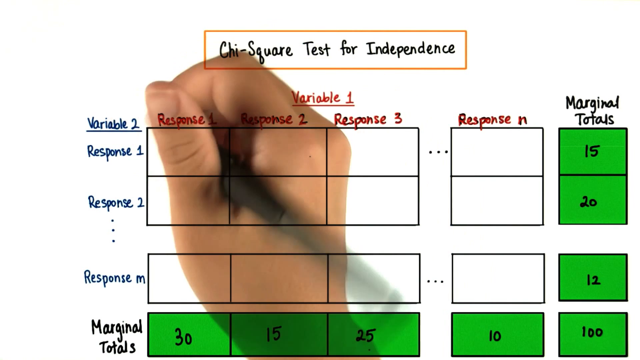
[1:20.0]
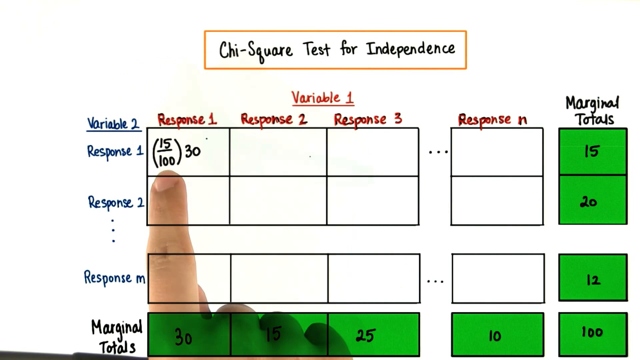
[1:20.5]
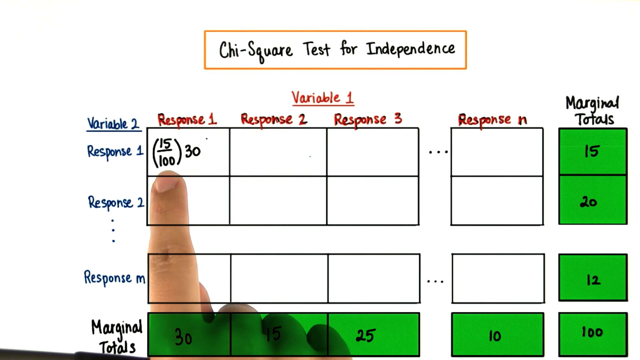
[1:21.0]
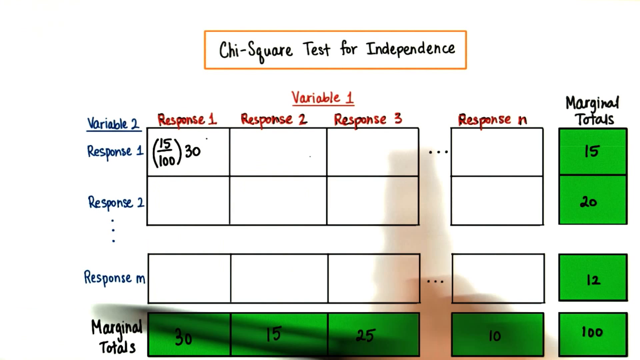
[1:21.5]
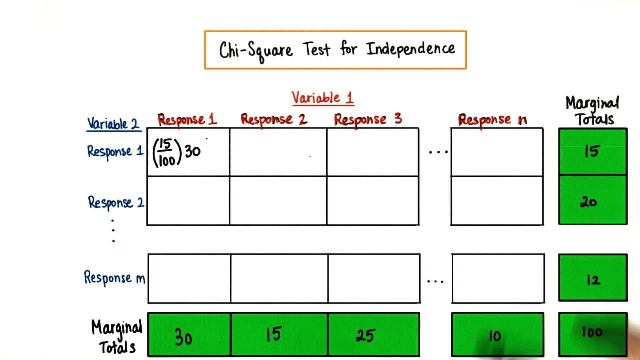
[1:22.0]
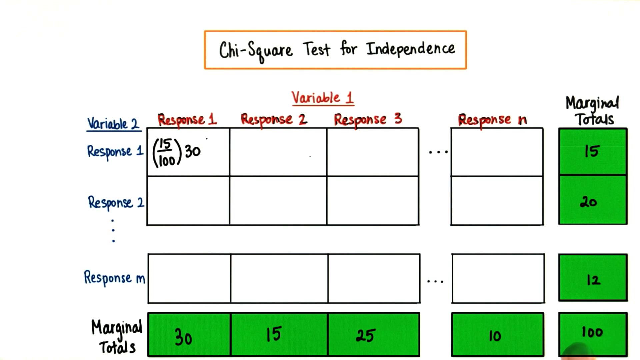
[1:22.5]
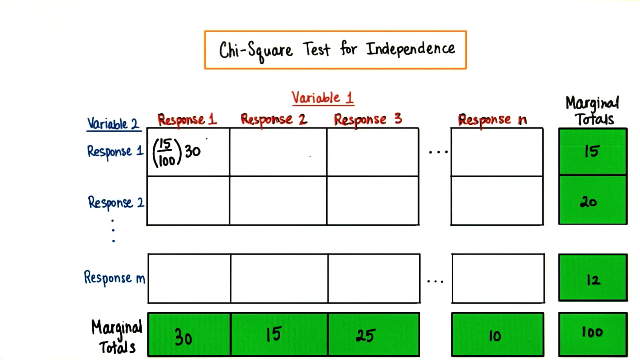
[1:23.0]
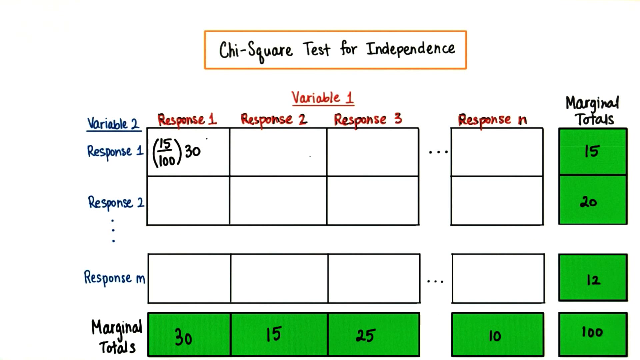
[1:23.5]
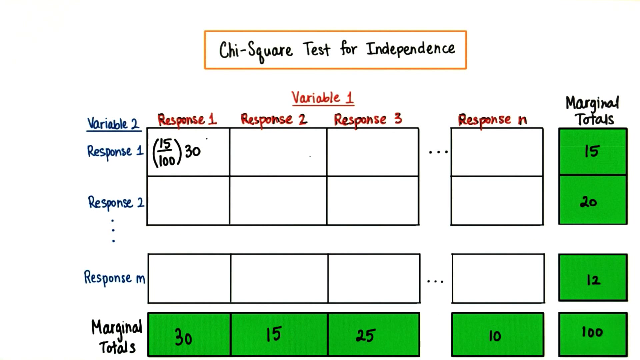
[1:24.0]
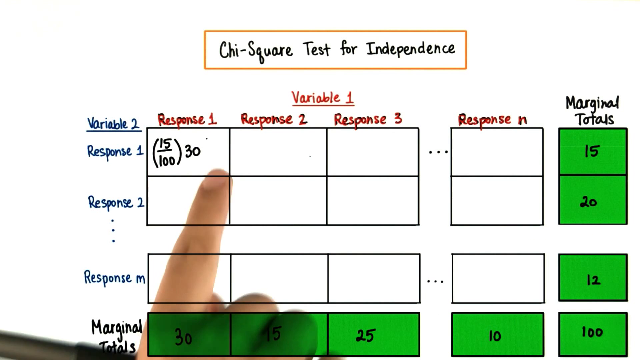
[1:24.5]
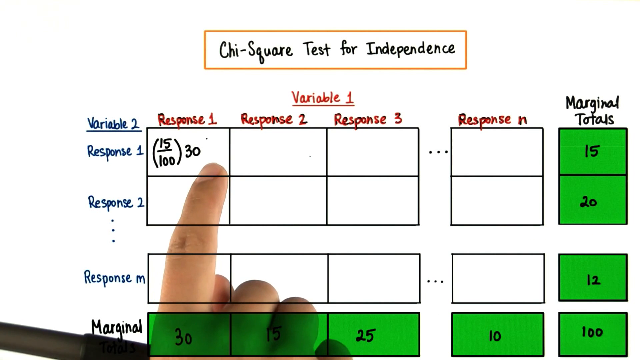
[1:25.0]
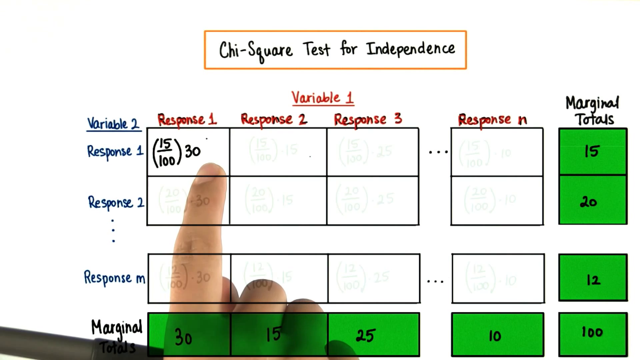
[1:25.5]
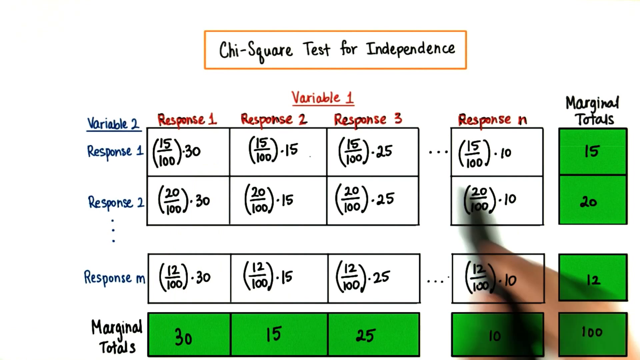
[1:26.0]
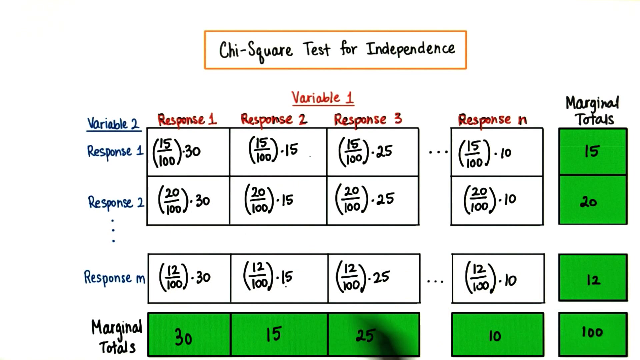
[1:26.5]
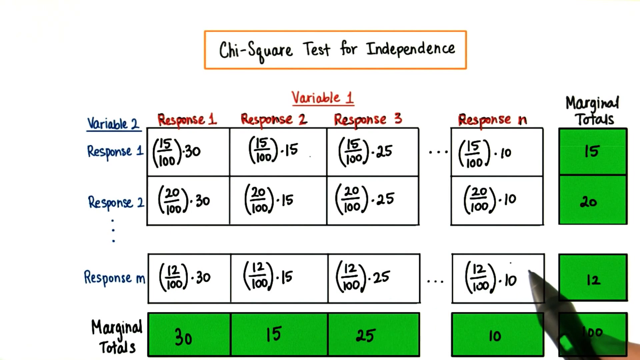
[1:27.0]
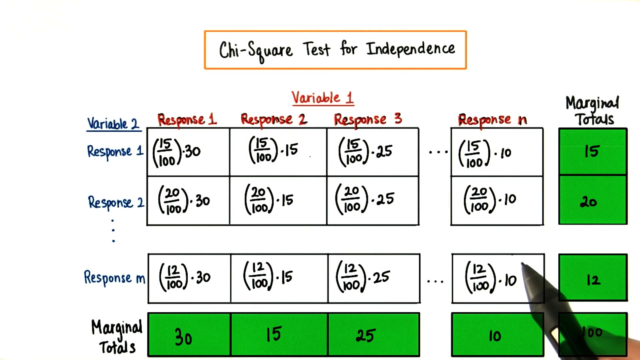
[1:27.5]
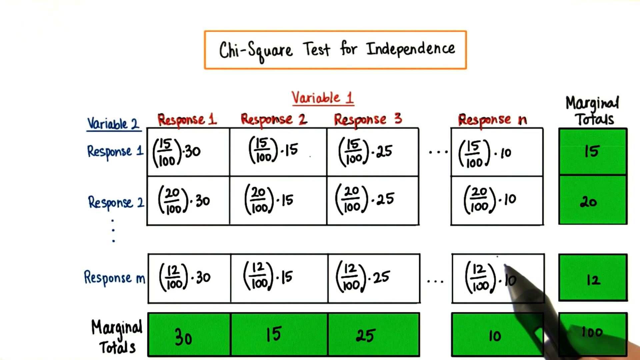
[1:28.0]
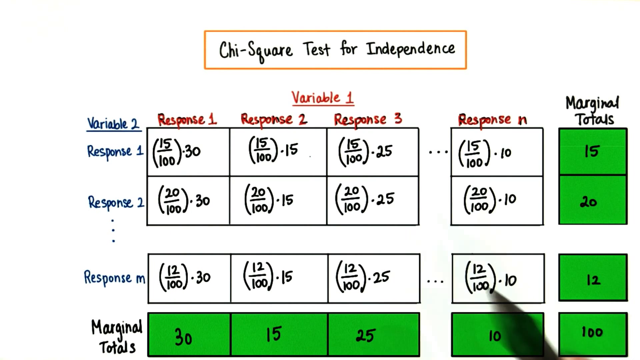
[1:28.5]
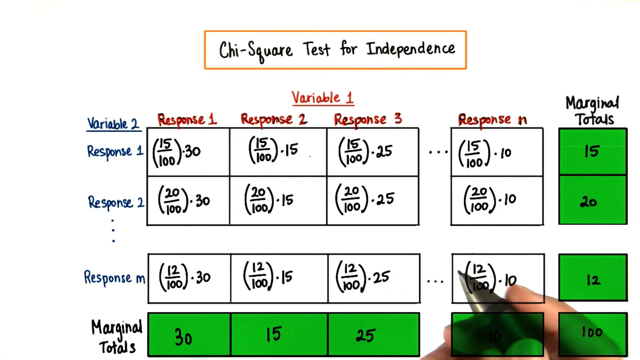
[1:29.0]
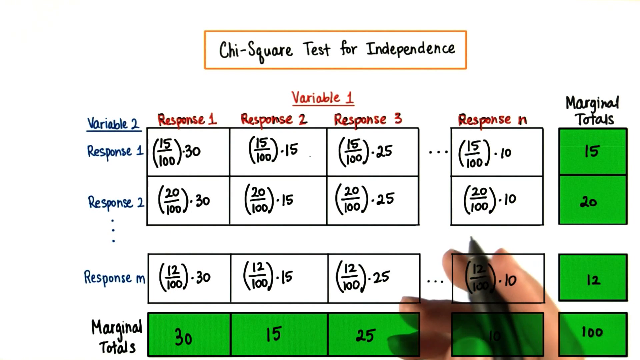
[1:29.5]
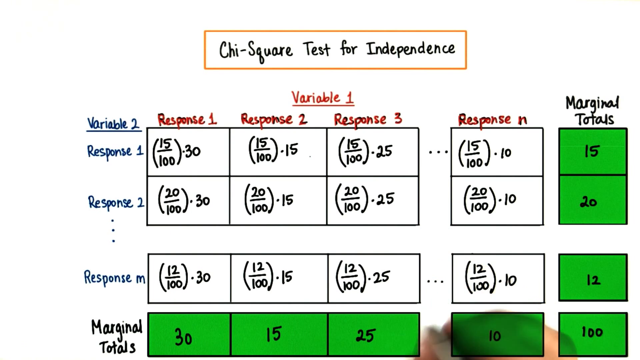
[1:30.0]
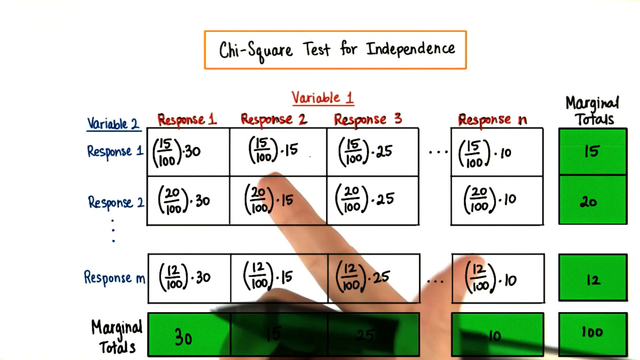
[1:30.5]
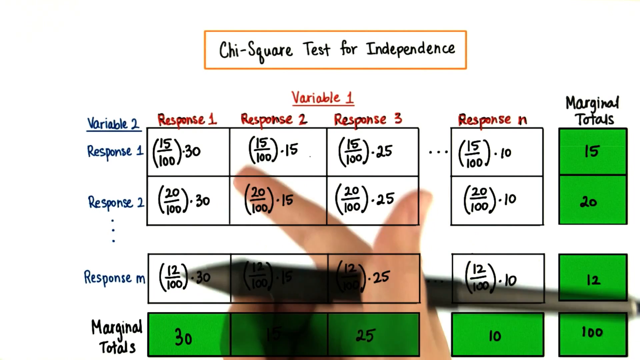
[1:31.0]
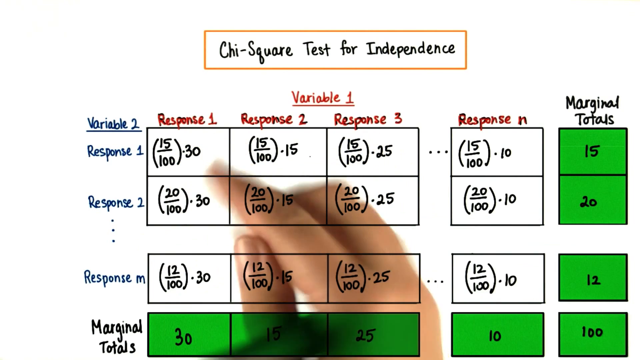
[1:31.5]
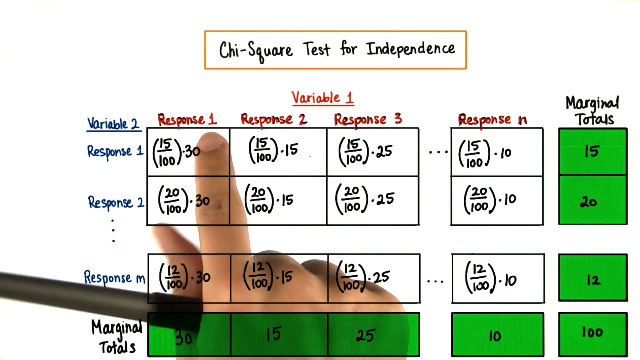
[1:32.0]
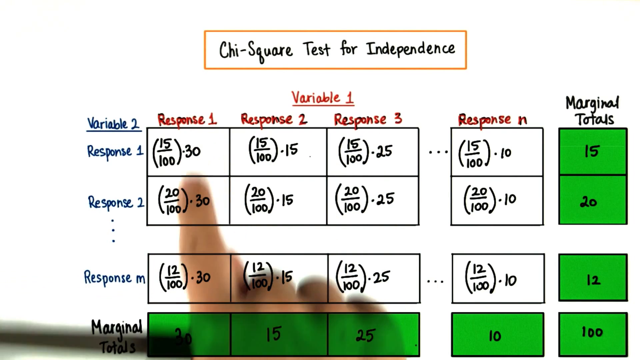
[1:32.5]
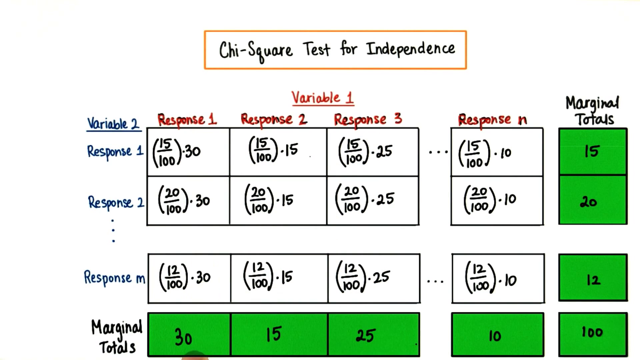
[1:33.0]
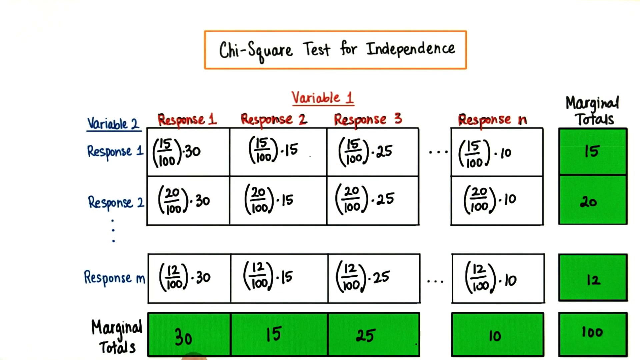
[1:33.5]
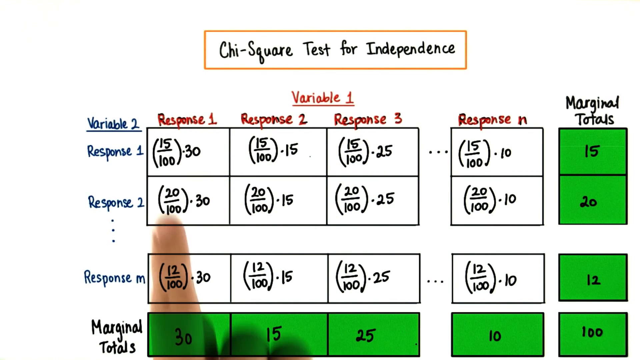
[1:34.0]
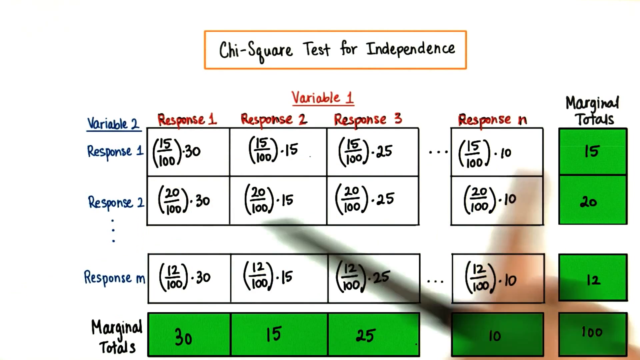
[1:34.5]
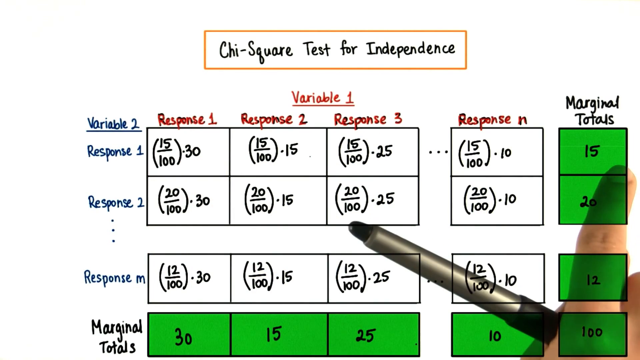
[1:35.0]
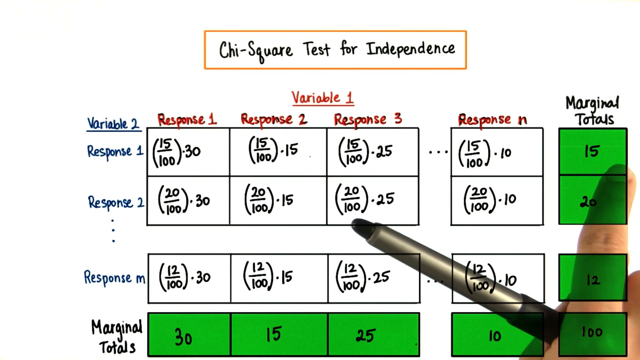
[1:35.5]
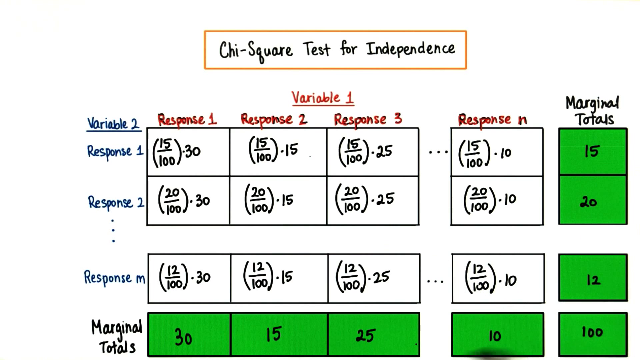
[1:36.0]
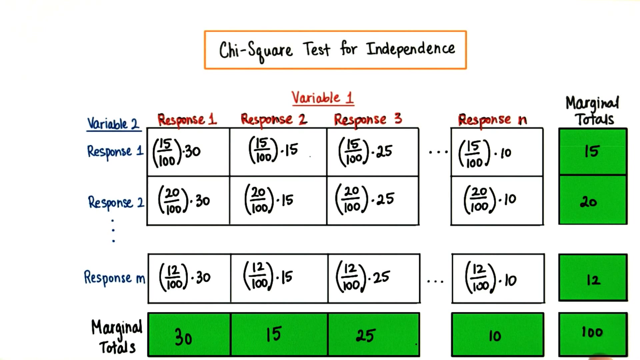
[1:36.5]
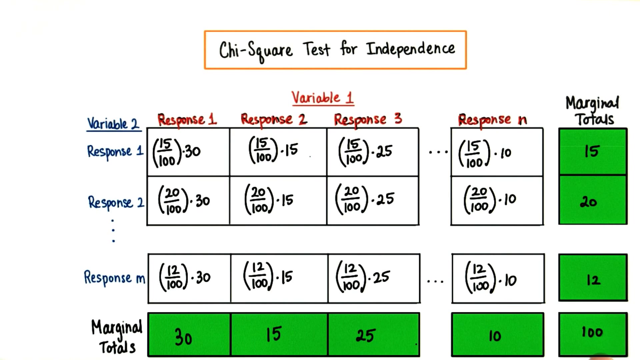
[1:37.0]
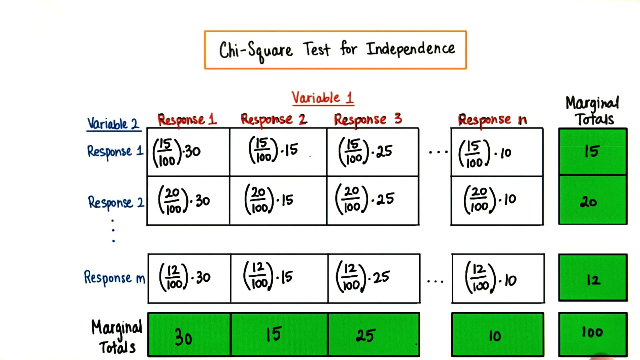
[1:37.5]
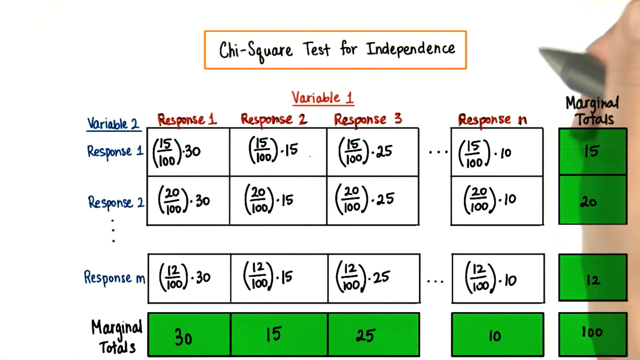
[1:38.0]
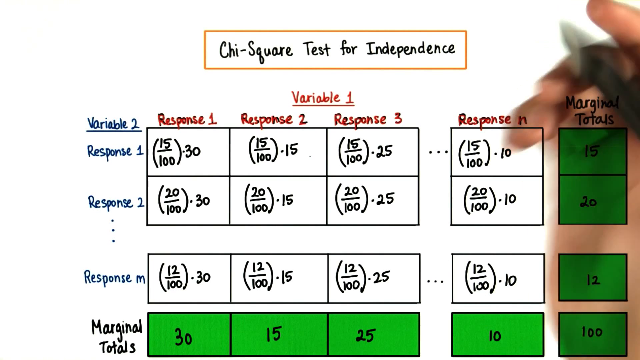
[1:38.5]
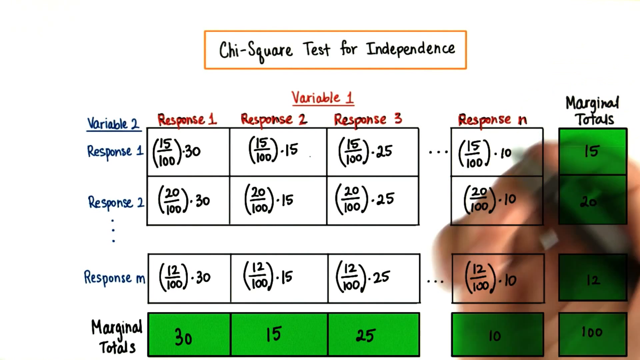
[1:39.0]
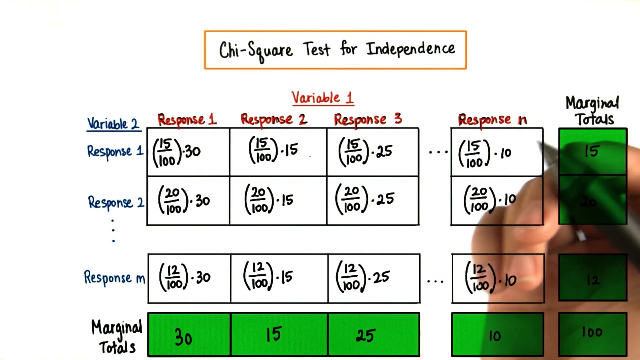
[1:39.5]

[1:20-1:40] The person continues writing and observing things in the data table. In the box for variable 2, response 1, they write 15 over 100 in parentheses, times 30. The video then skips ahead to all the remaining boxes filled in, each with the same structure but many with different numbers. Apparently all of them use multiples of 5 except response M, which has 12 divided by 100. Response 1 is divided by 15 and response 2 by 20. Response 1 is always multiplied by 30, response 2 by 15, response 3 by 25, and response M by 10.